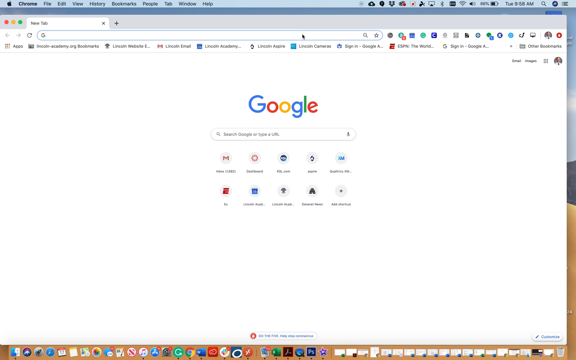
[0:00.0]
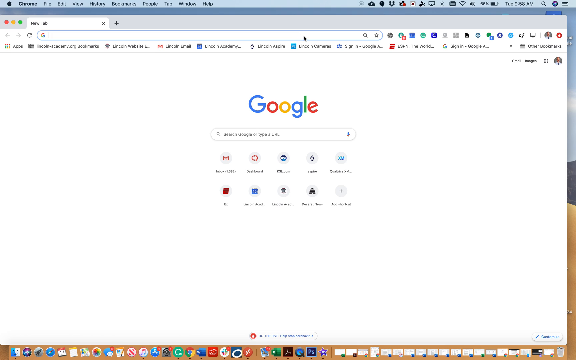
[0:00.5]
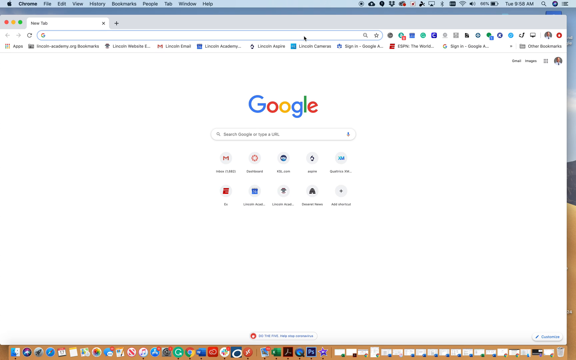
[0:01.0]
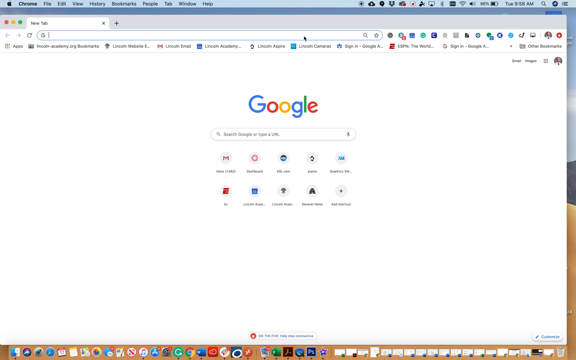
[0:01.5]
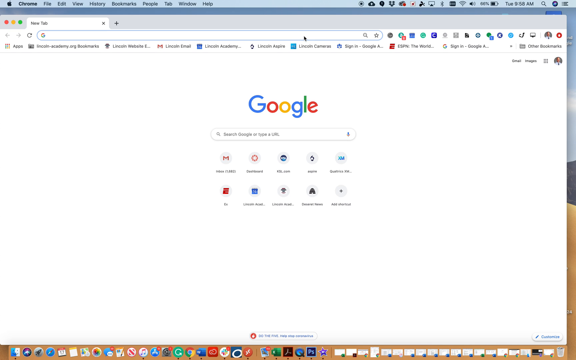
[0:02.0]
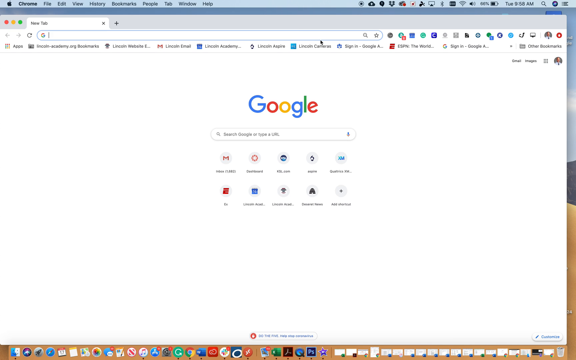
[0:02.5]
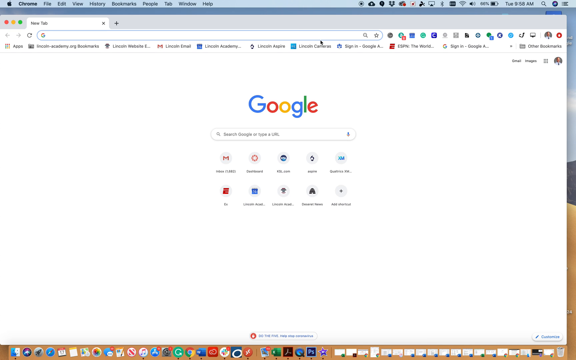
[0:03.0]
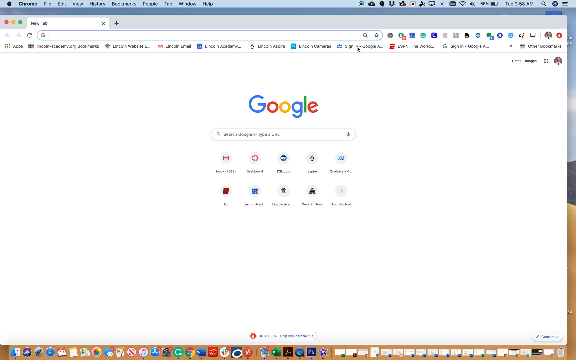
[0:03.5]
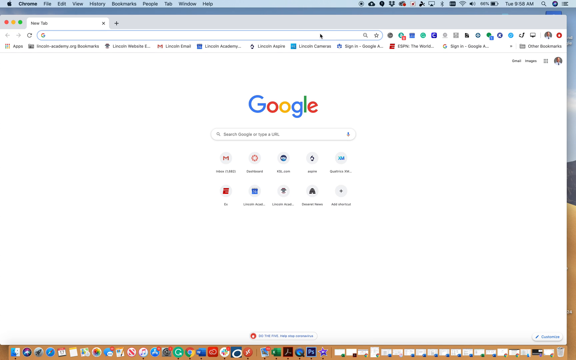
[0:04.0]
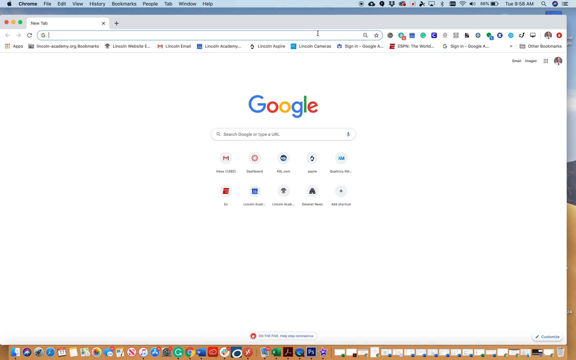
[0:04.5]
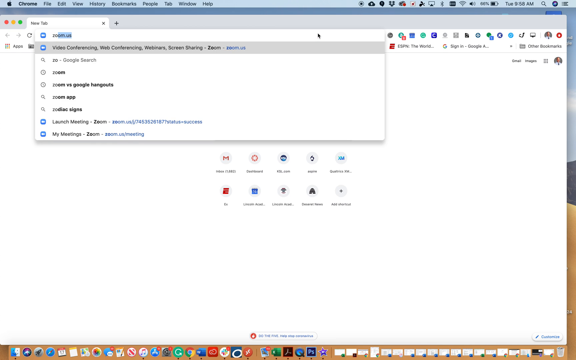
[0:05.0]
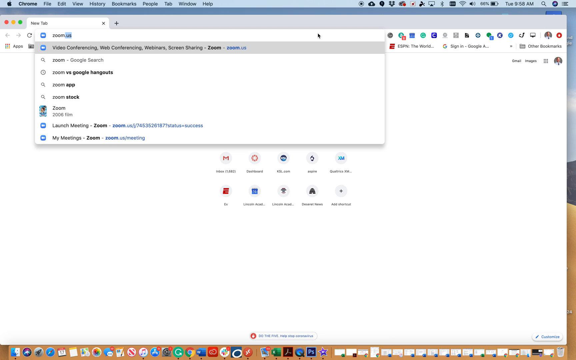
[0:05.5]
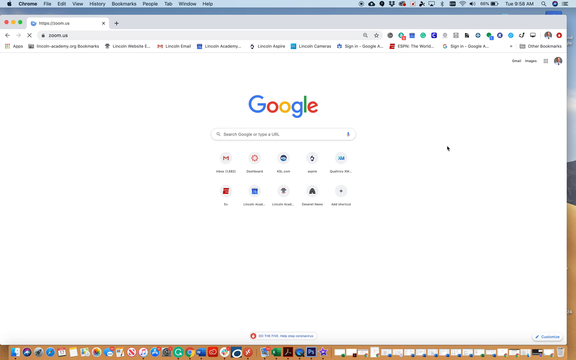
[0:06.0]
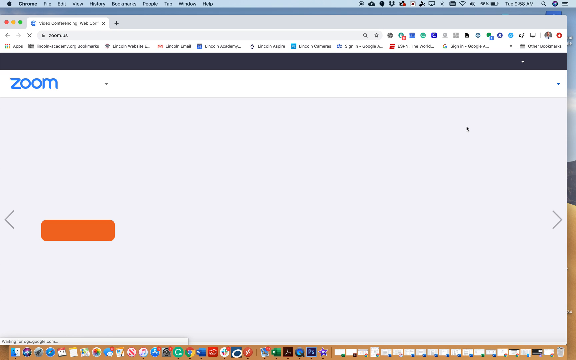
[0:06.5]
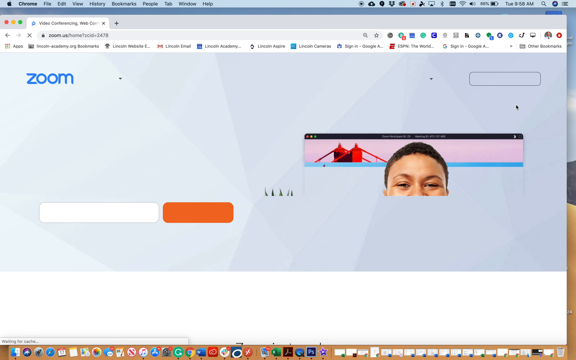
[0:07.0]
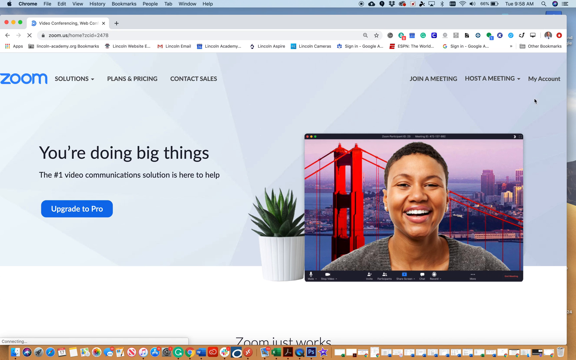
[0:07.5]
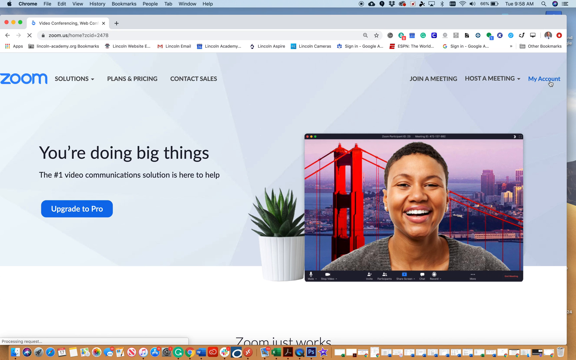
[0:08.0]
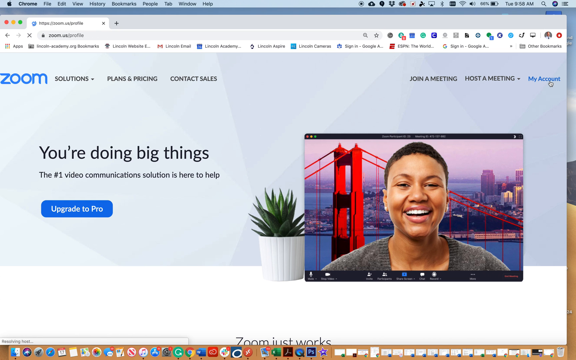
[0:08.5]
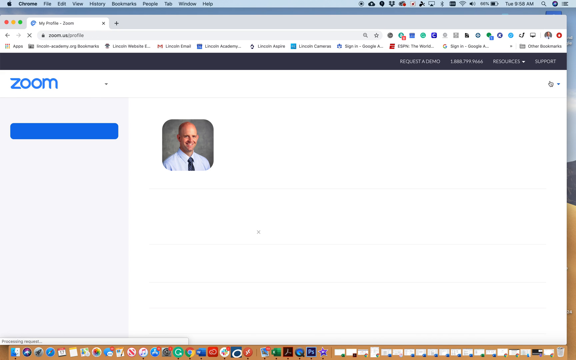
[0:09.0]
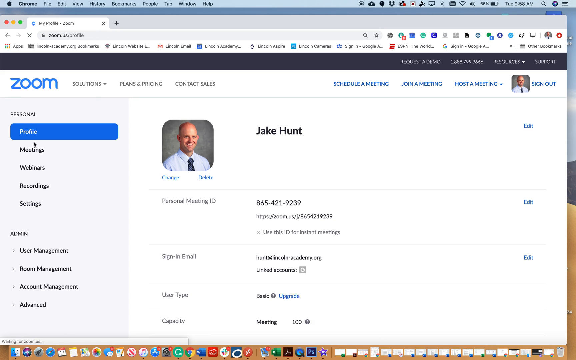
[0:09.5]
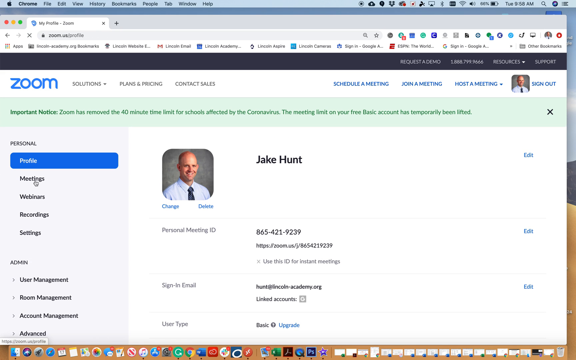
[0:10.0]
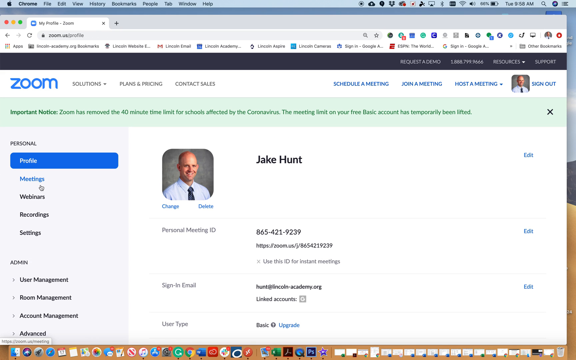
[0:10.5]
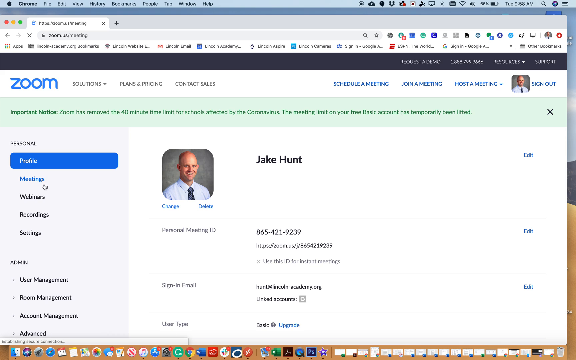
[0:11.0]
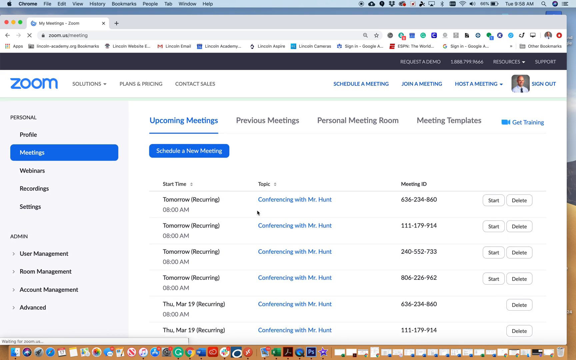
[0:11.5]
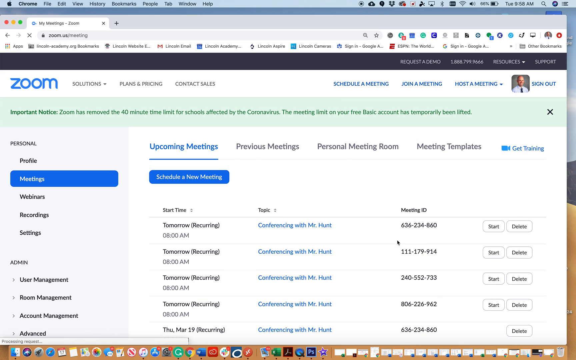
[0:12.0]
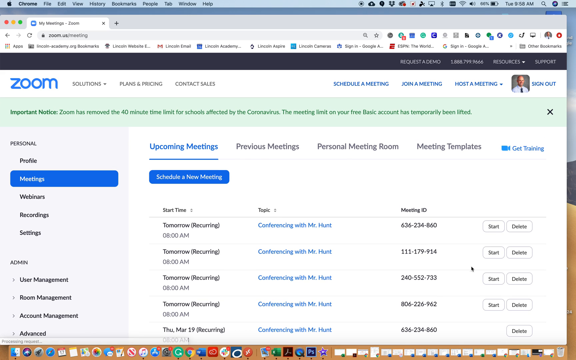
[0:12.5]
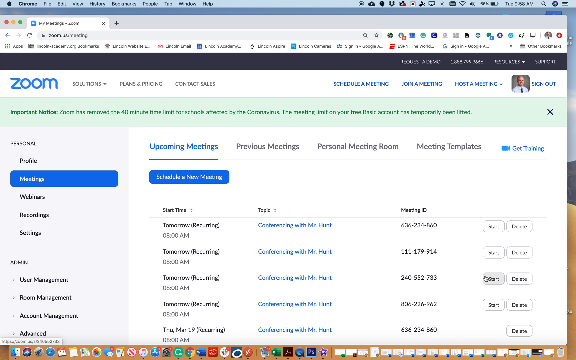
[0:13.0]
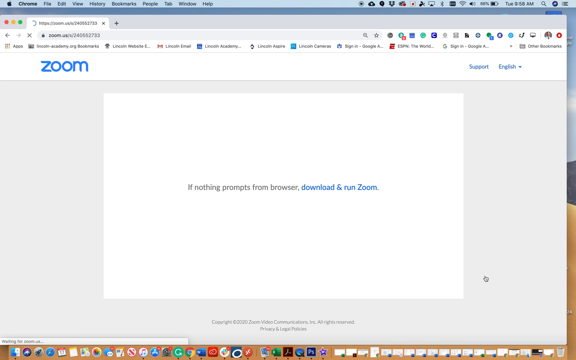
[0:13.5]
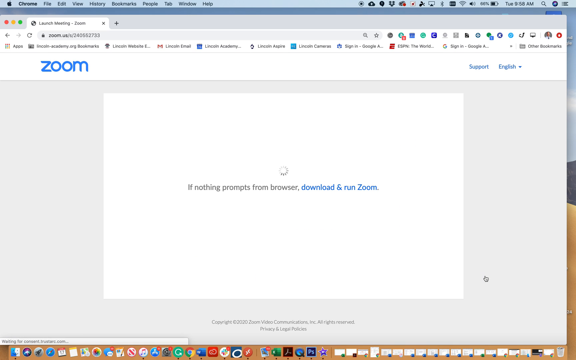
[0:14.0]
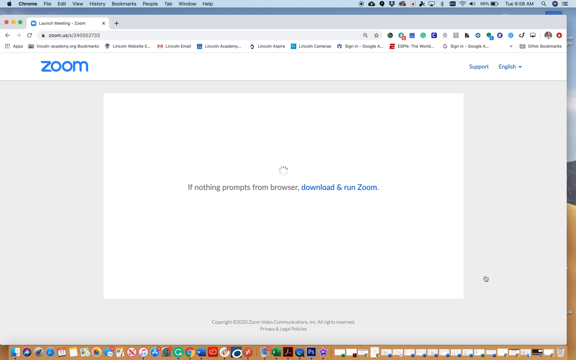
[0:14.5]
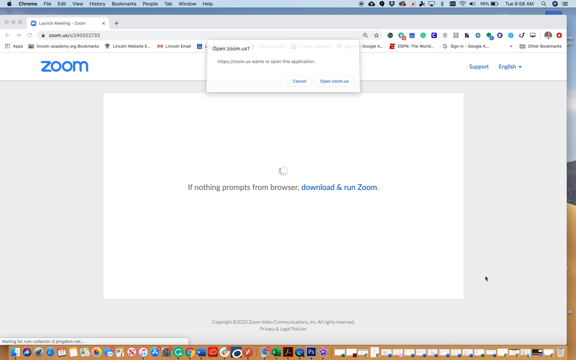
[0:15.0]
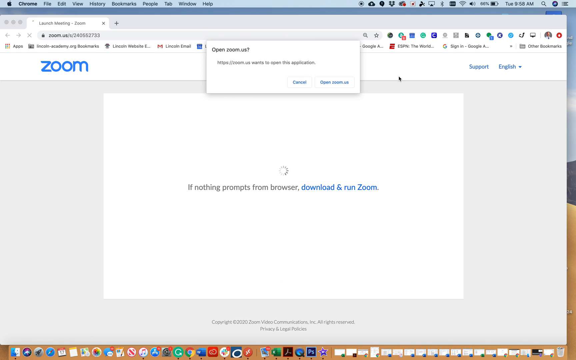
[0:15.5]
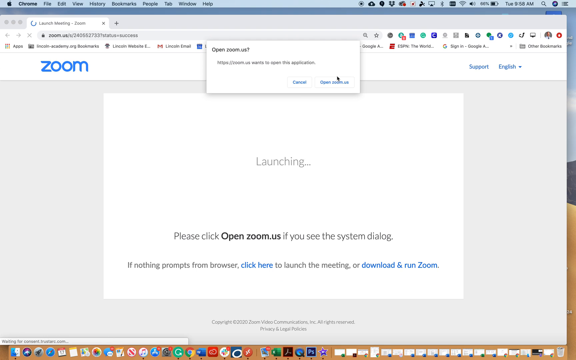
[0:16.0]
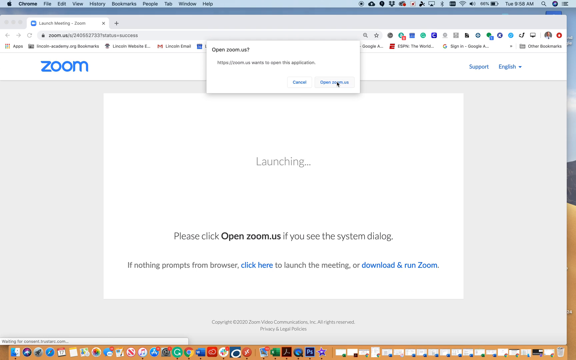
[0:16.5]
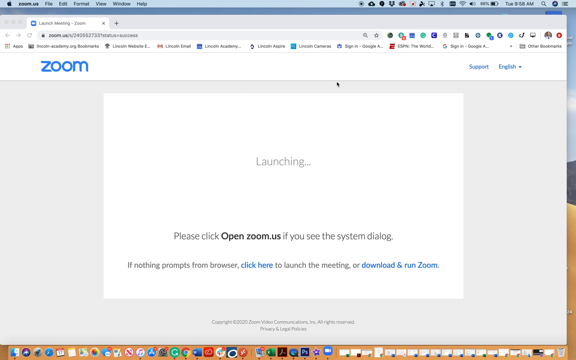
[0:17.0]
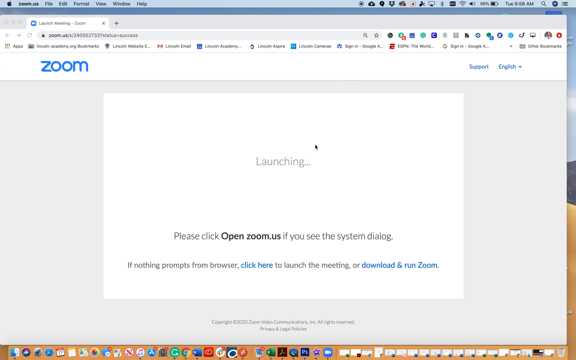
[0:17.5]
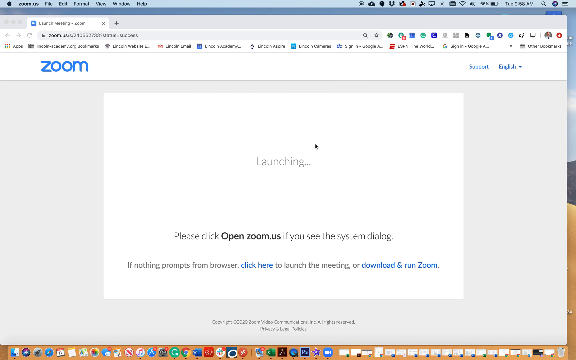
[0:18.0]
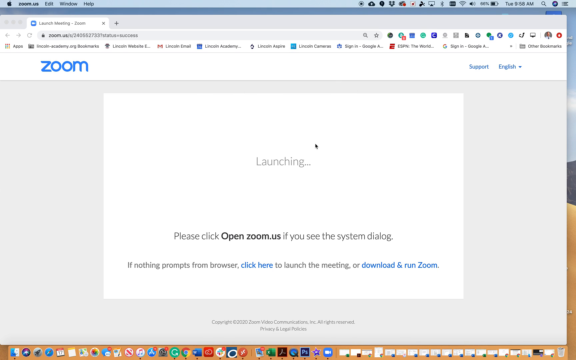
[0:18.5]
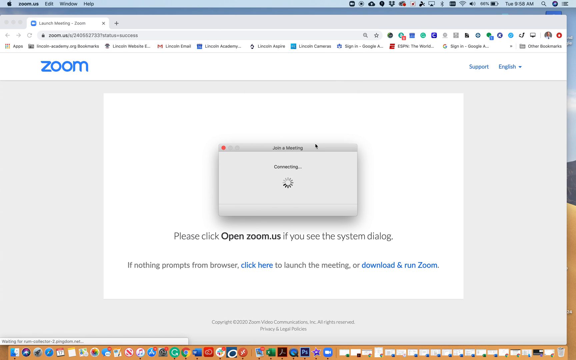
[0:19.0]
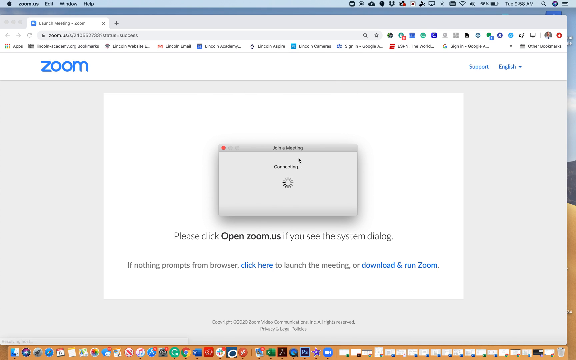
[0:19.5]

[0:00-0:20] The video begins on a Google browser, where the user has entered the web address zoom.us. The Google browser is on a white background, with various saved bookmarks in the tabs list and shortcuts for various websites; the user's profile picture is in the right-hand corner. The browser connects to zoom.us, whose website is on a white background with "zoom" written in blue. After a transition, "Zoom solutions" with a down arrow appears in black at the top left. At the top right of the screen, in black letters, are "plans and pricing," "contact sales," "join a meeting," "host a meeting" with a down arrow, and "my account." Below, on the left side, it reads "the number one video communication solution is here to help," and underneath is a blue clickable button with white letters reading "upgrade to pro." On the right side of the screen is a green succulent plant in a white pot holder, and next to the plant is a screenshot of a Zoom user: a Black woman with short cropped hair, smiling widely with her white teeth showing, wearing a gray sweater, with a Zoom background of a red bridge with a skyline behind her. The user clicks My Account, and after a transition the user is shown to be Jake Hunt. The video then transitions to meetings, where "schedule a new meeting" is highlighted in blue.